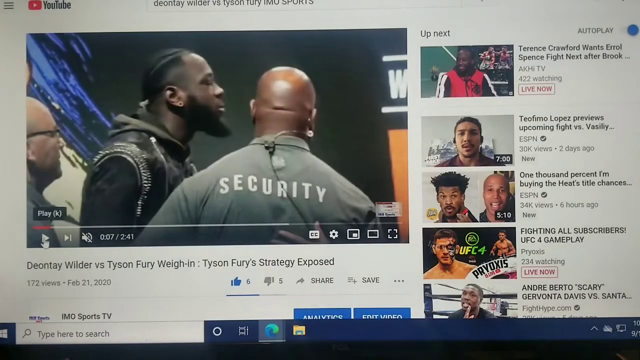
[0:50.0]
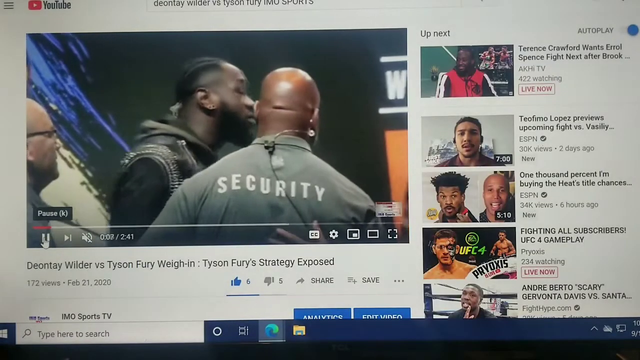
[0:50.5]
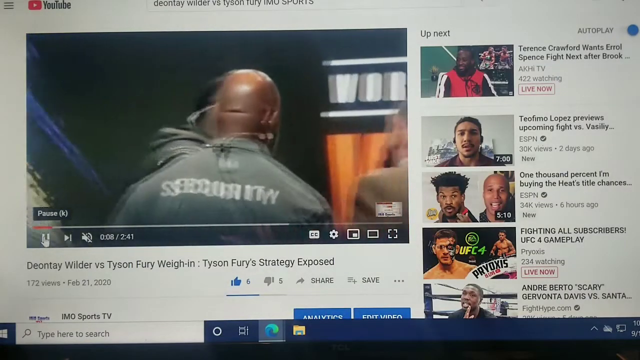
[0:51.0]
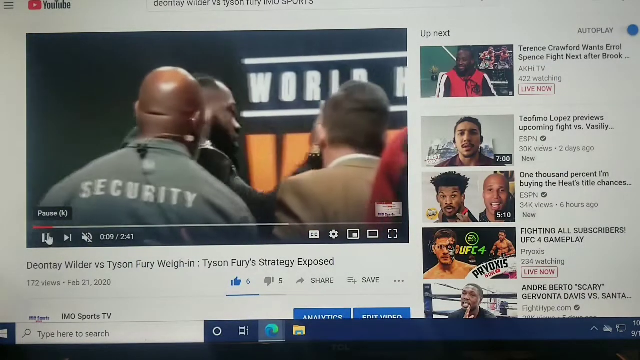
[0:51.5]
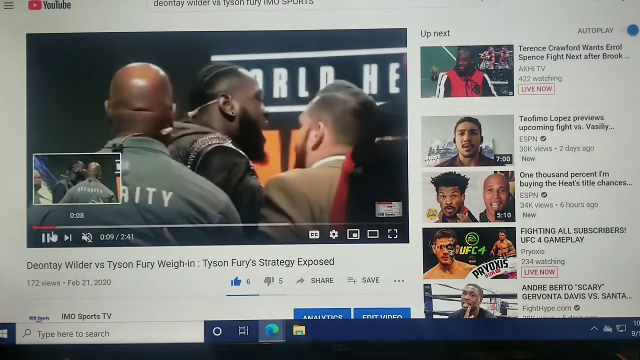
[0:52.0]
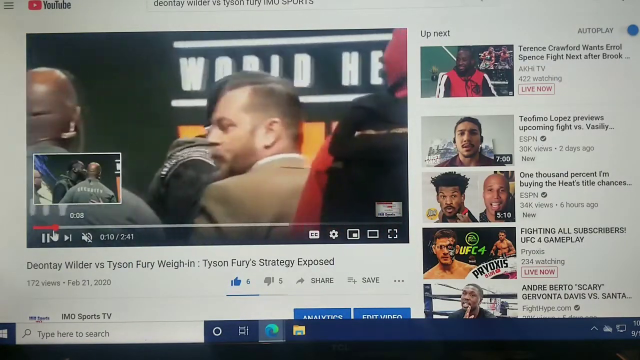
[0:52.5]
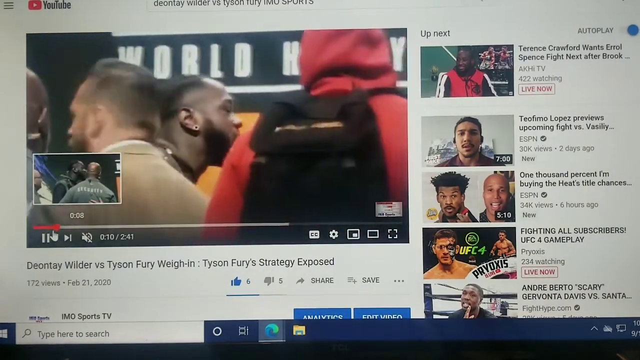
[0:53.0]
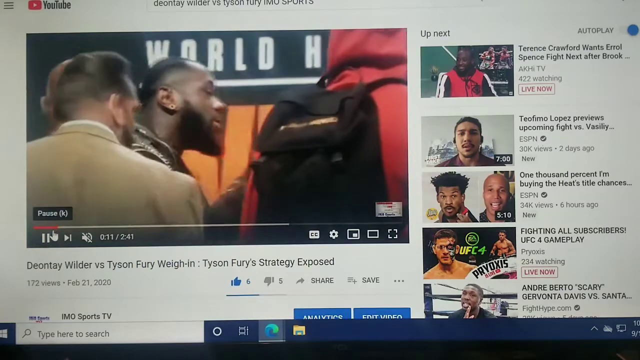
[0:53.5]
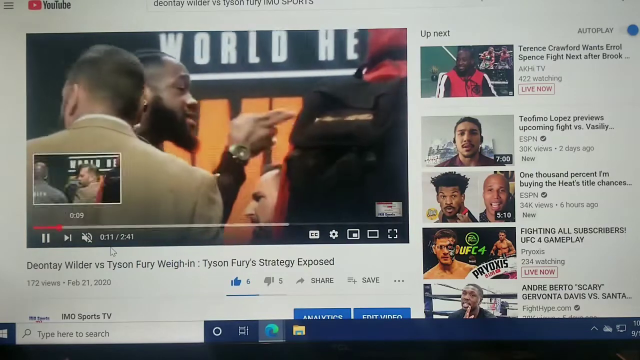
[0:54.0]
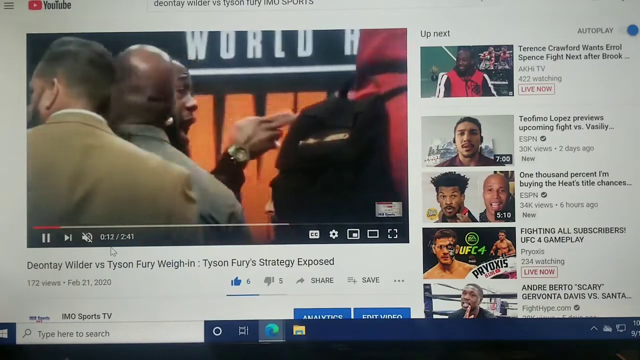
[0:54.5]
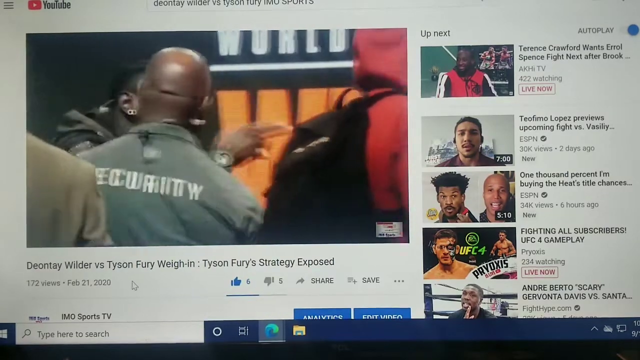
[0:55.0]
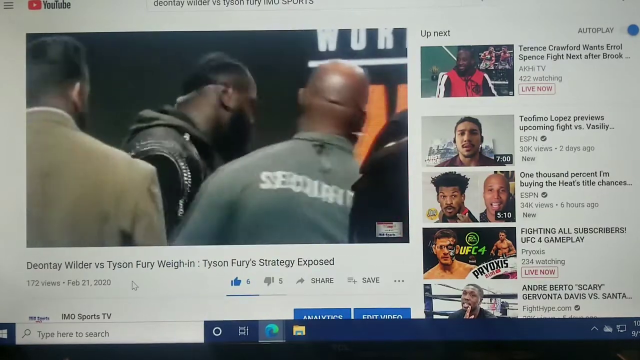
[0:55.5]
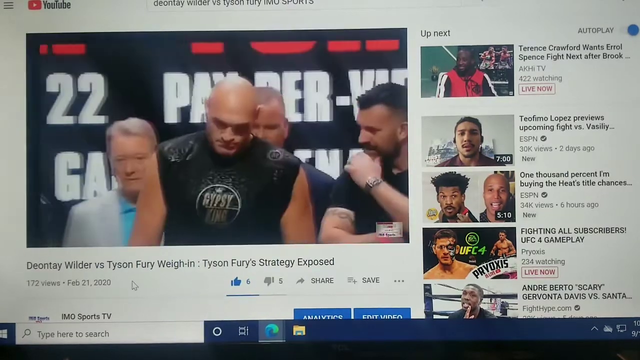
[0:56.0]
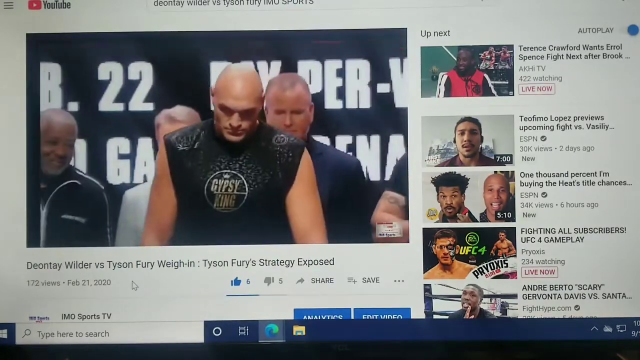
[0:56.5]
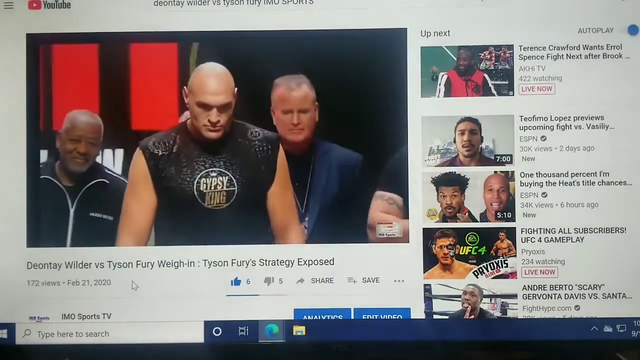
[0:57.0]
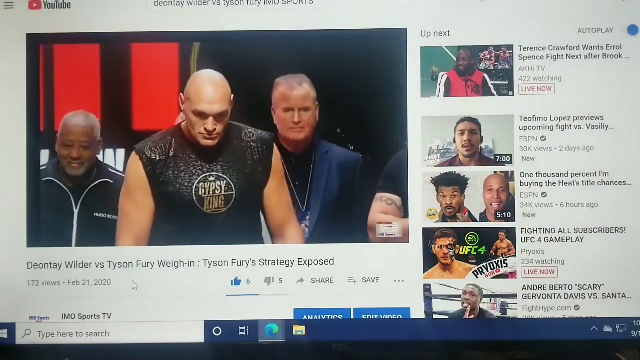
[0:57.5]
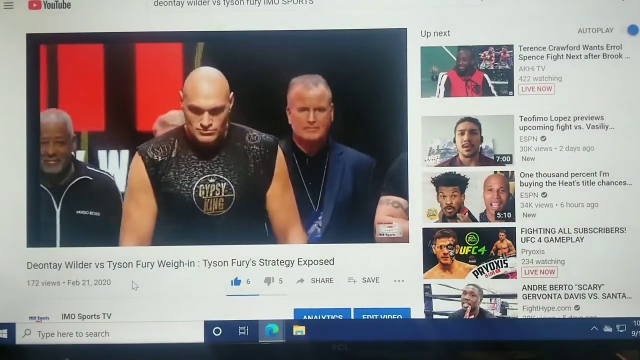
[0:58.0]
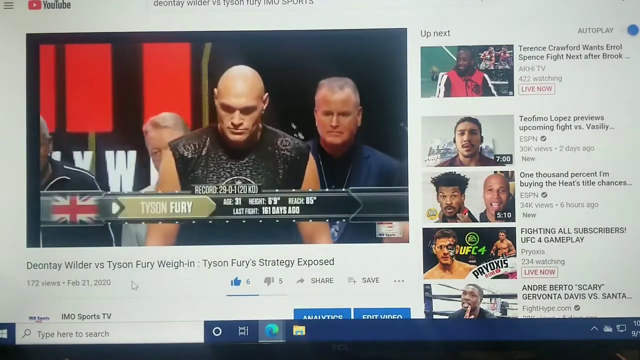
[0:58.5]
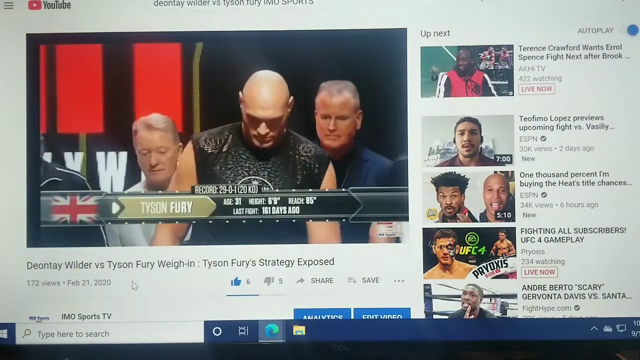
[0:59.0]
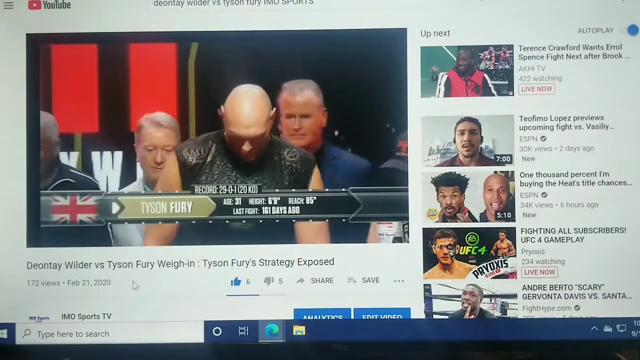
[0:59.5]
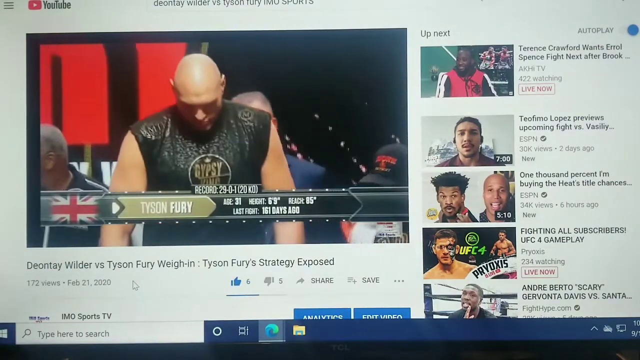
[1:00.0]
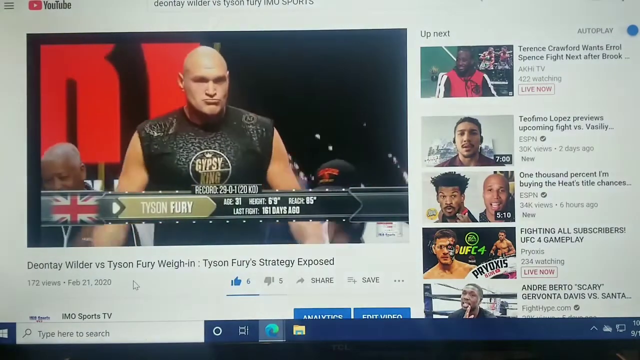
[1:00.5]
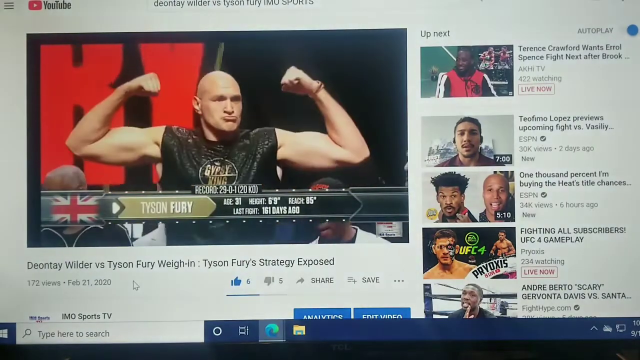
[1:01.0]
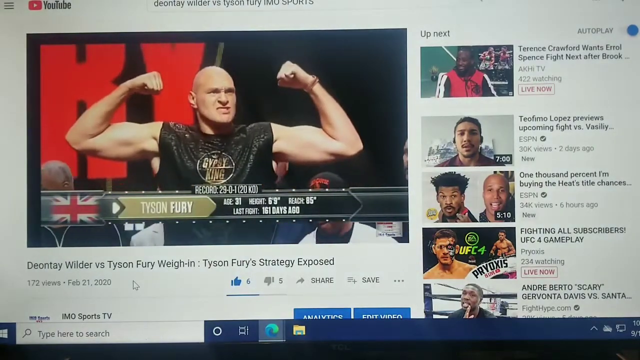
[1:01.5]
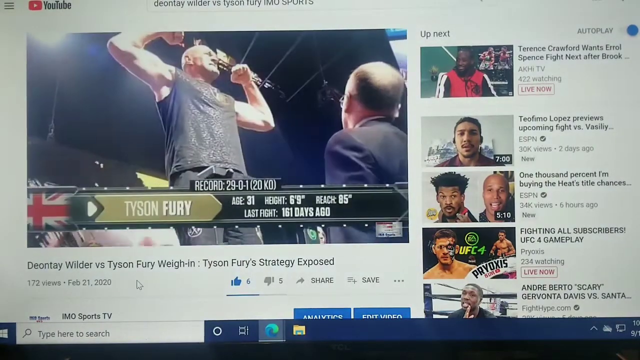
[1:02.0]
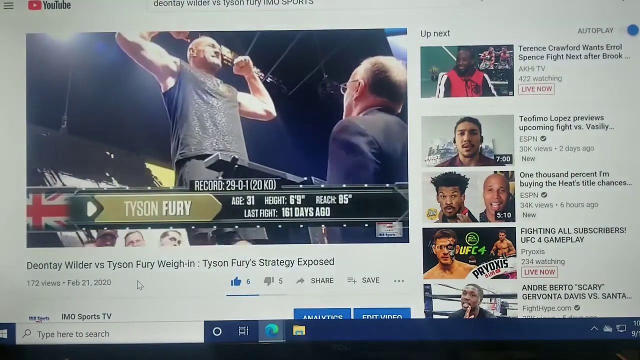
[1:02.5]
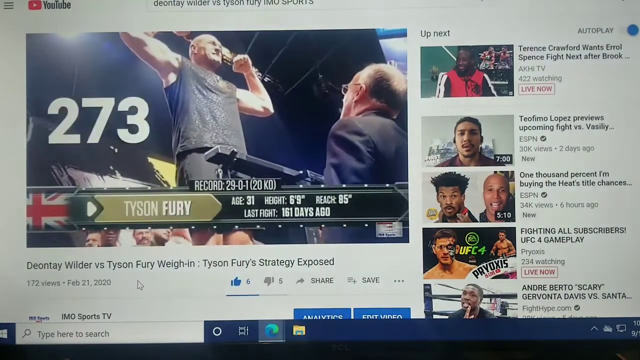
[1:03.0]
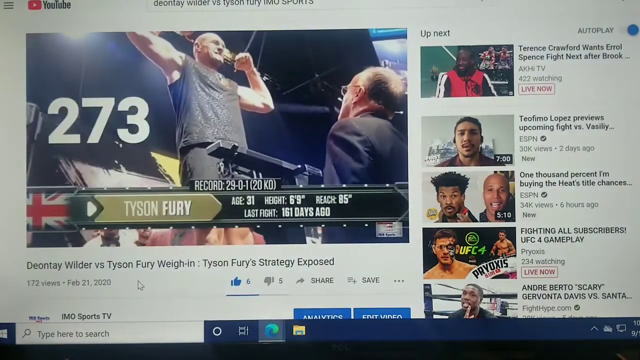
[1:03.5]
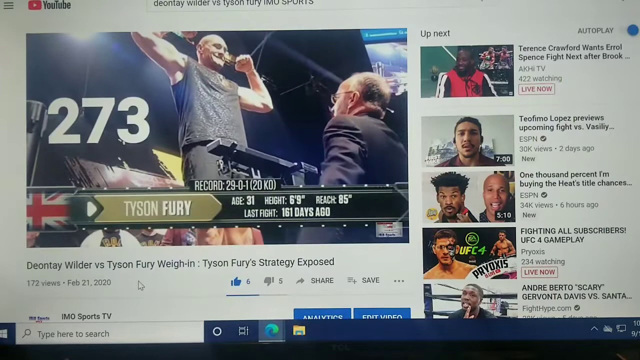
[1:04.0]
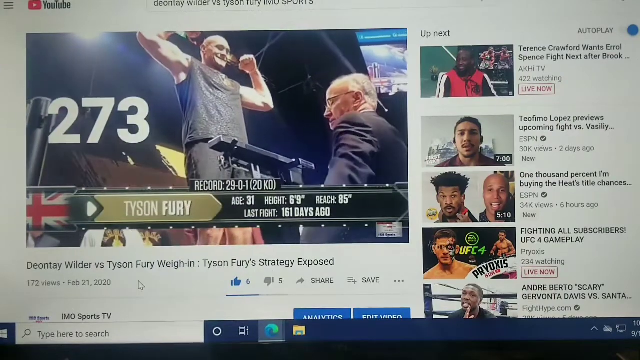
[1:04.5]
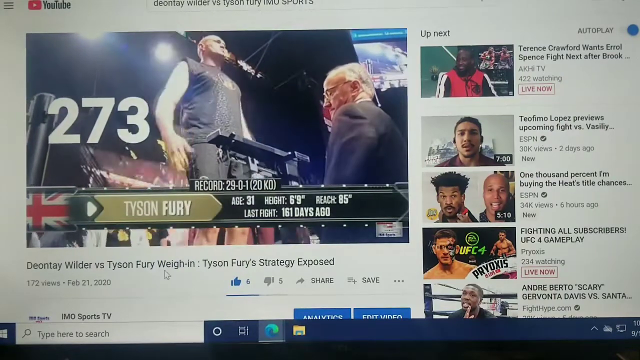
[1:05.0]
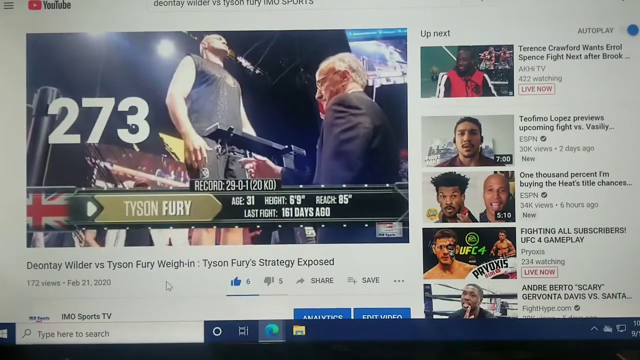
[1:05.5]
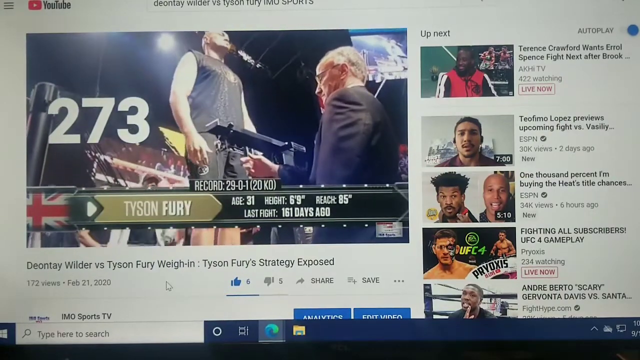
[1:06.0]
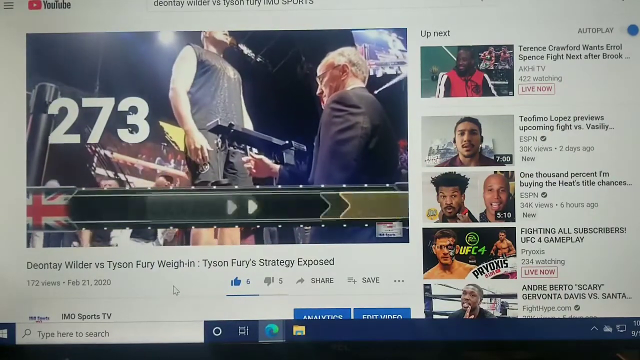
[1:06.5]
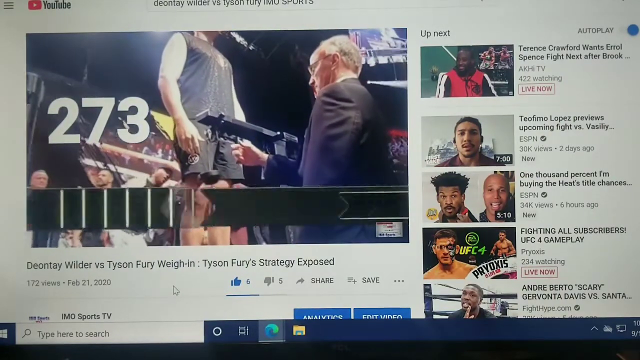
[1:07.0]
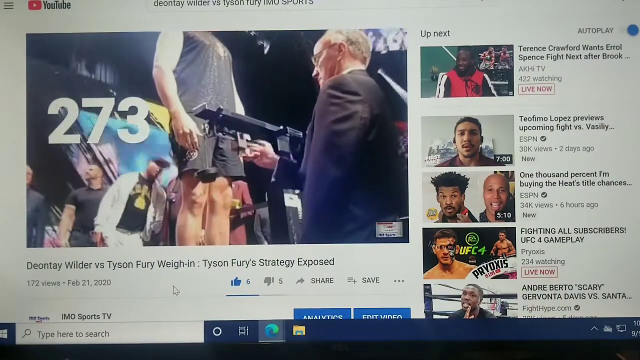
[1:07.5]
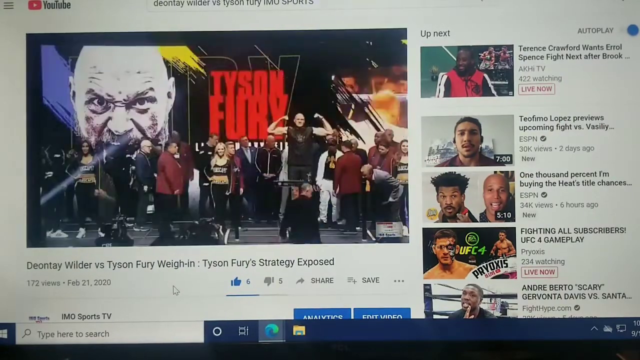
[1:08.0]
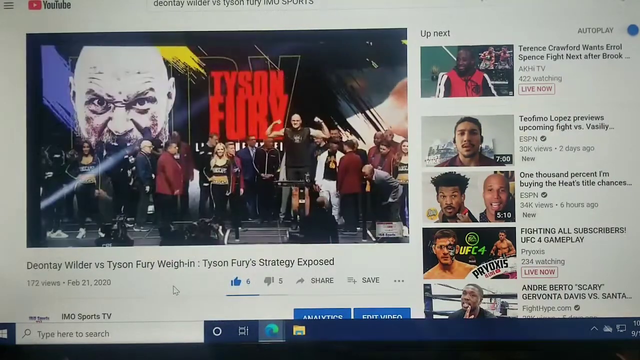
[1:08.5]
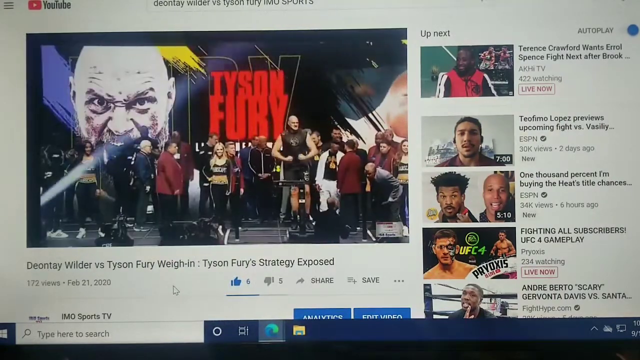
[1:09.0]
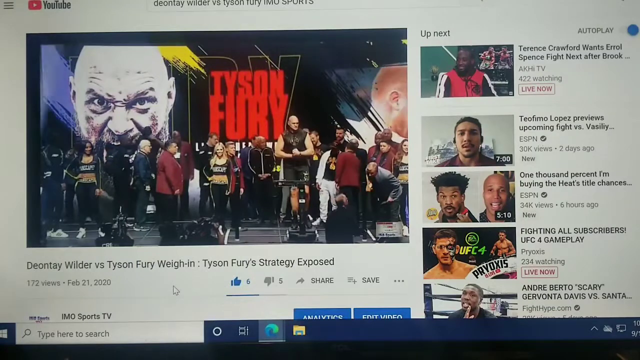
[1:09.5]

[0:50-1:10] Someone is recording their computer. A white mouse cursor in the shape of a hand is on a YouTube video; the play button has just been clicked and the video is playing. It shows a black man pointing with his right hand, his forefinger and middle finger put together, and he seems very angry. Then a white man appears on the screen, very bald and very muscular. He stands up on some type of platform, scrunches his eyes, nose, and lips, then puts his arms up in the air and flexes his biceps. The camera changes view to the base of the man looking up at him; he is very tall and all muscle.